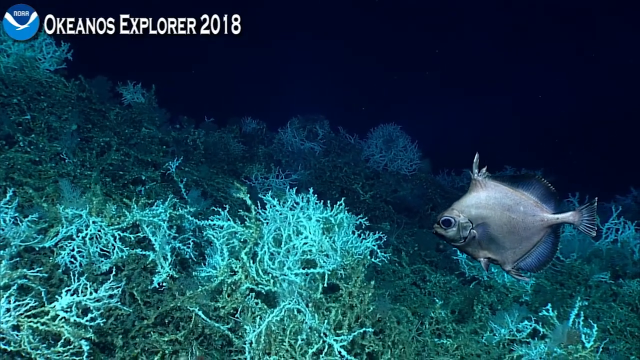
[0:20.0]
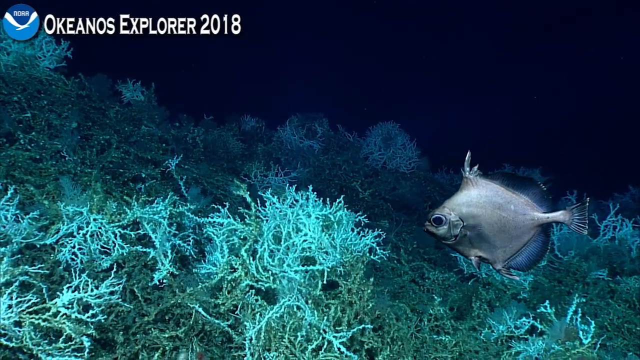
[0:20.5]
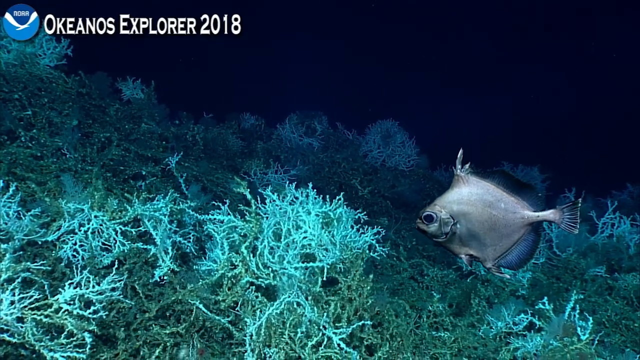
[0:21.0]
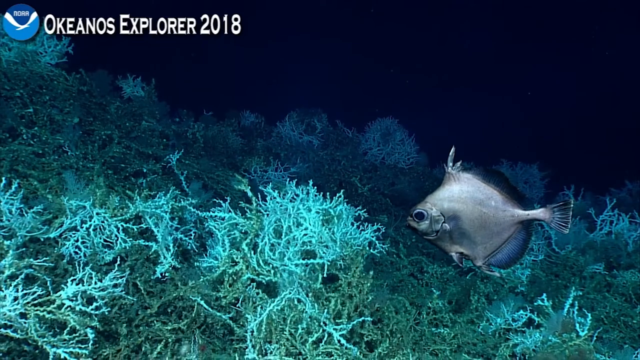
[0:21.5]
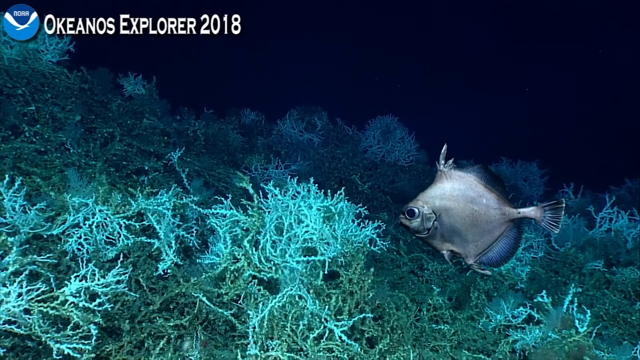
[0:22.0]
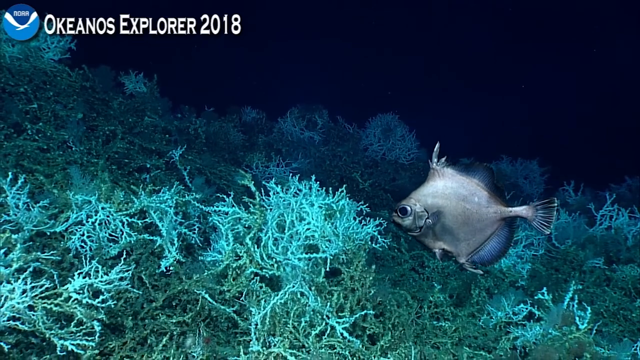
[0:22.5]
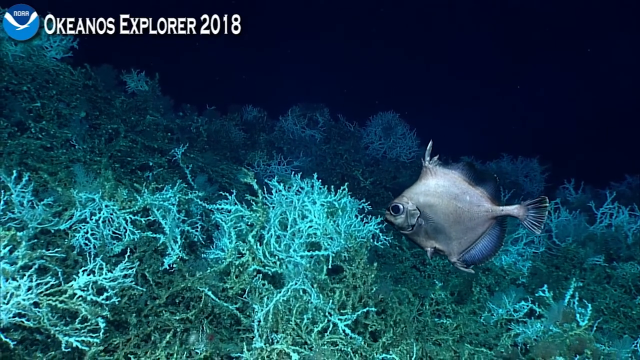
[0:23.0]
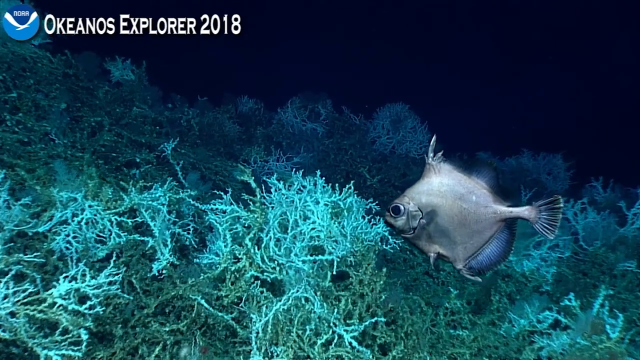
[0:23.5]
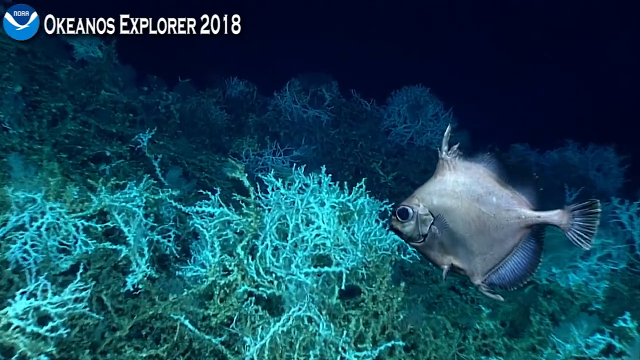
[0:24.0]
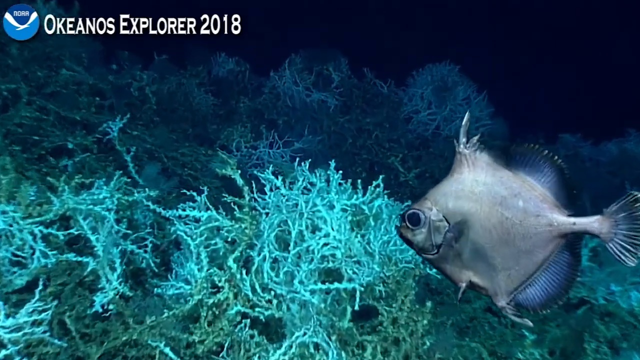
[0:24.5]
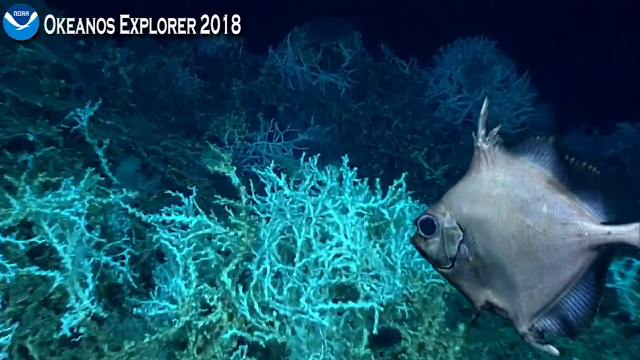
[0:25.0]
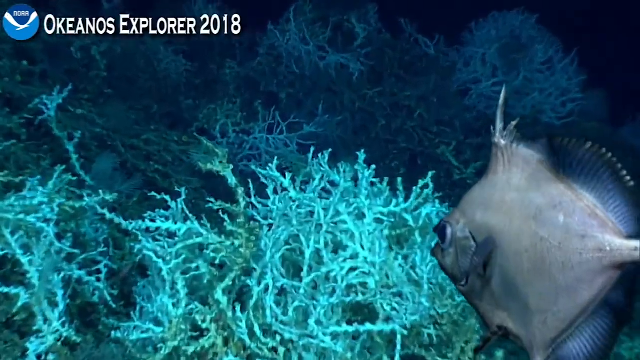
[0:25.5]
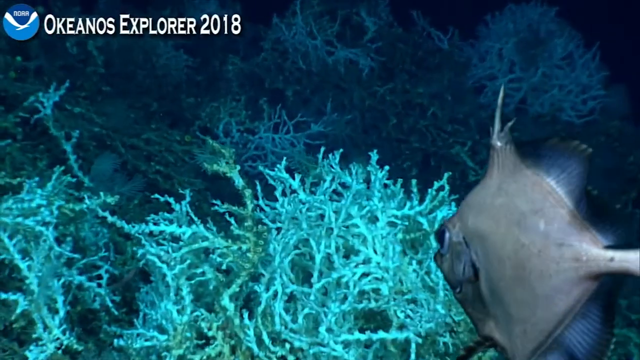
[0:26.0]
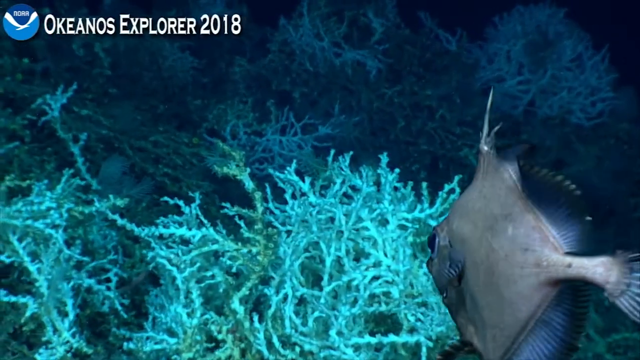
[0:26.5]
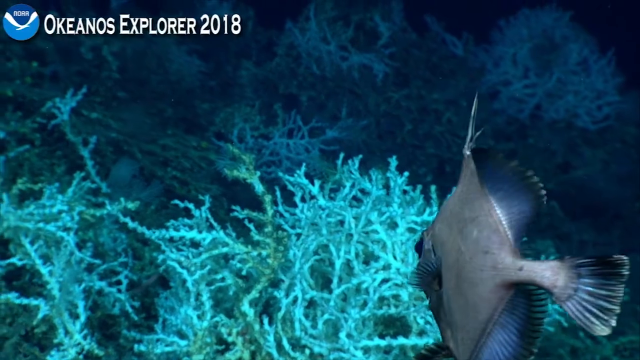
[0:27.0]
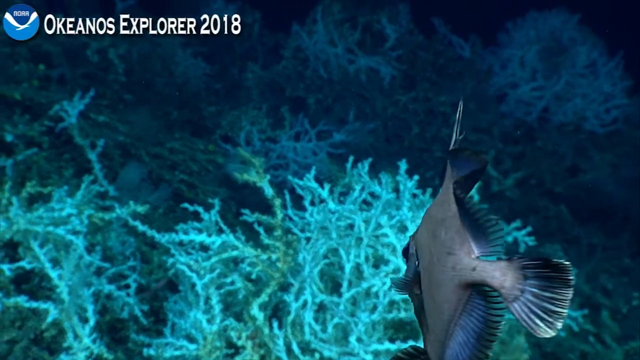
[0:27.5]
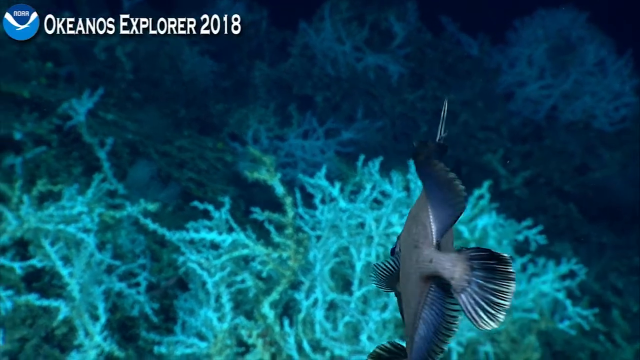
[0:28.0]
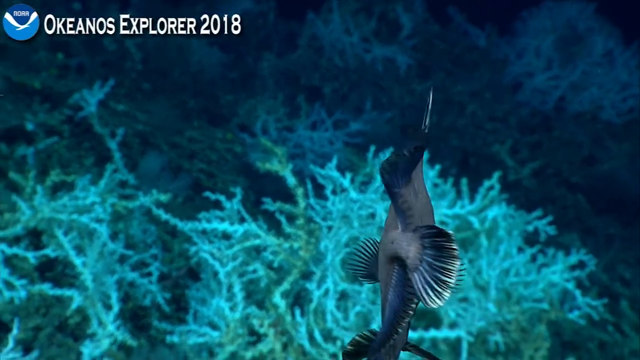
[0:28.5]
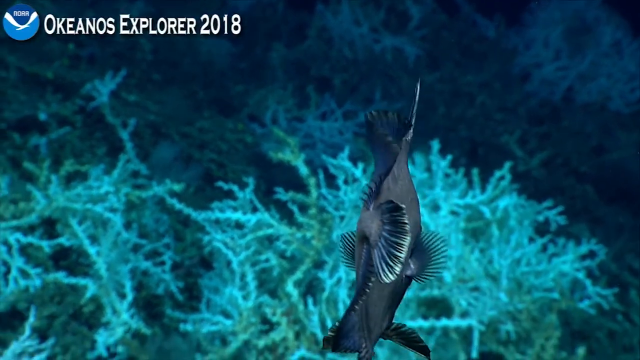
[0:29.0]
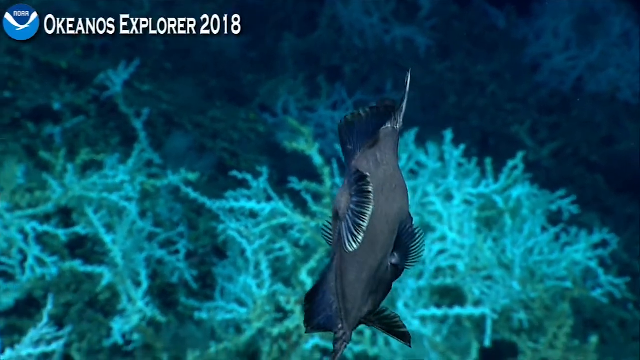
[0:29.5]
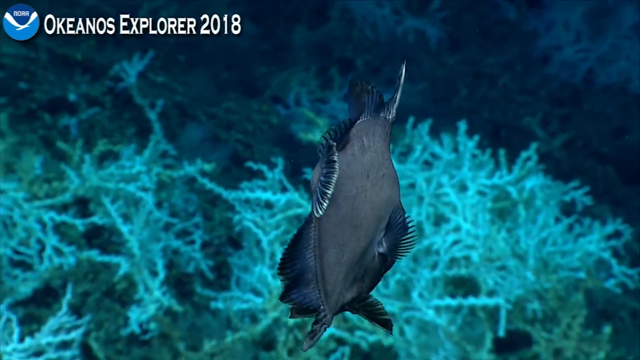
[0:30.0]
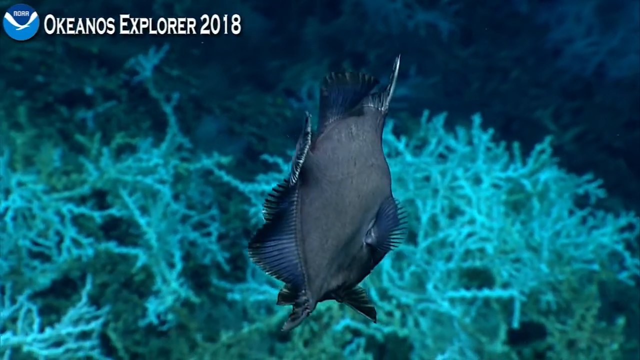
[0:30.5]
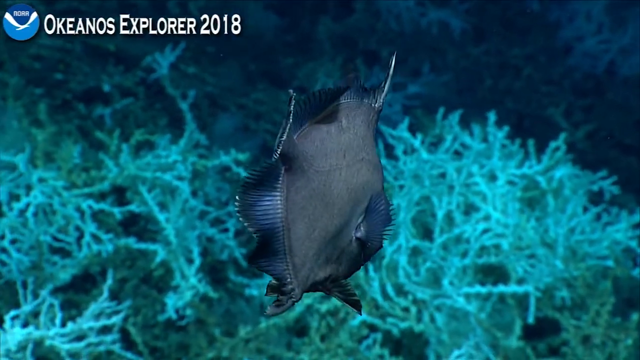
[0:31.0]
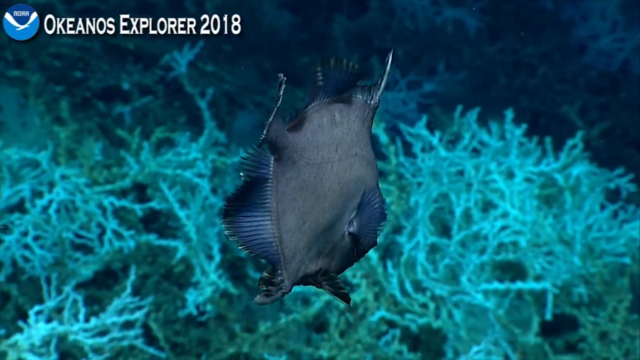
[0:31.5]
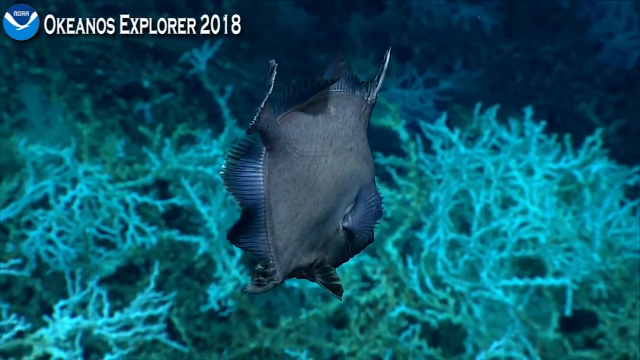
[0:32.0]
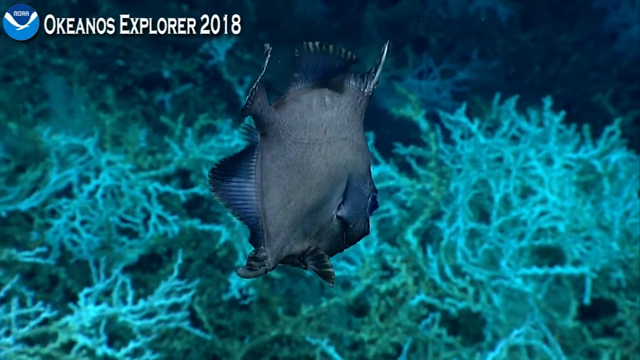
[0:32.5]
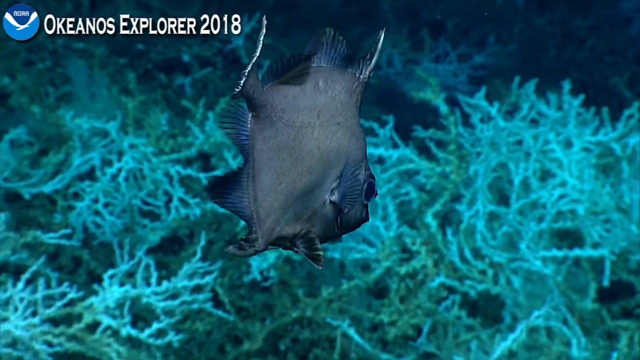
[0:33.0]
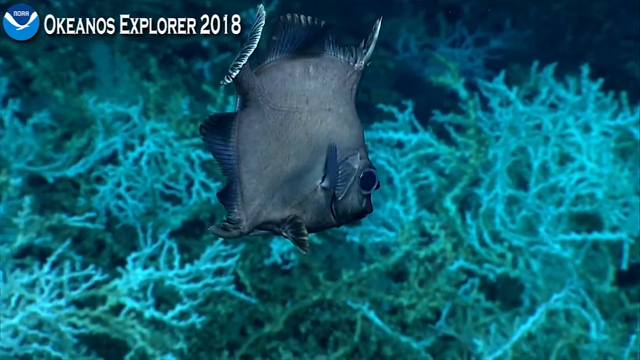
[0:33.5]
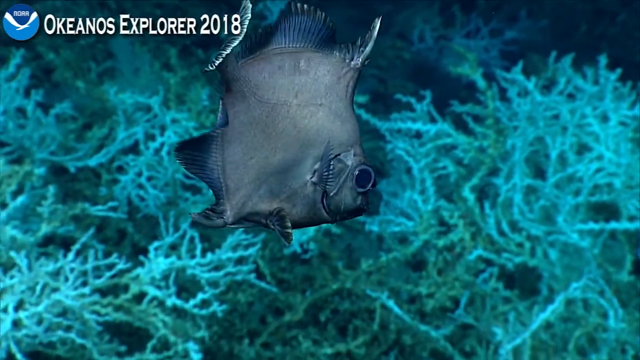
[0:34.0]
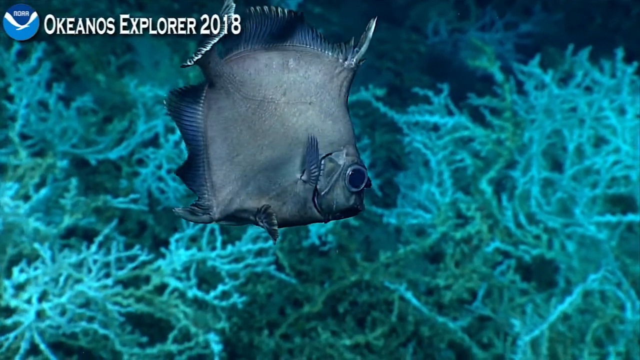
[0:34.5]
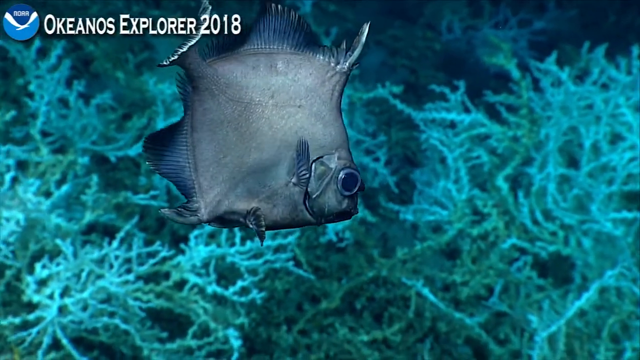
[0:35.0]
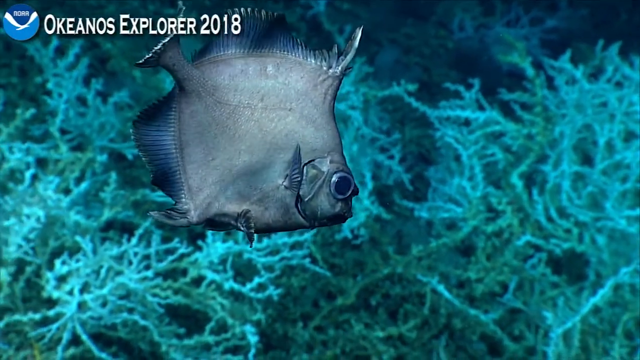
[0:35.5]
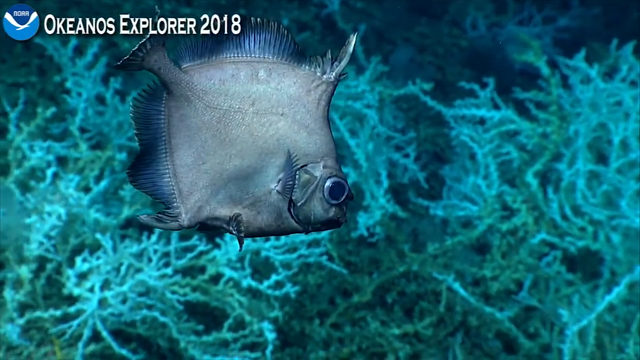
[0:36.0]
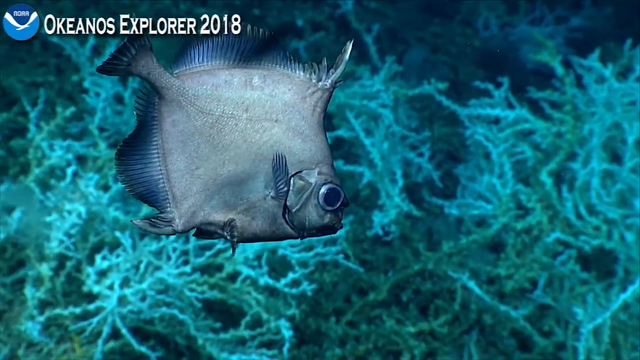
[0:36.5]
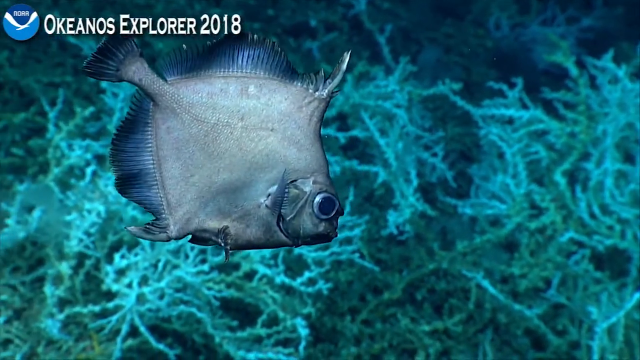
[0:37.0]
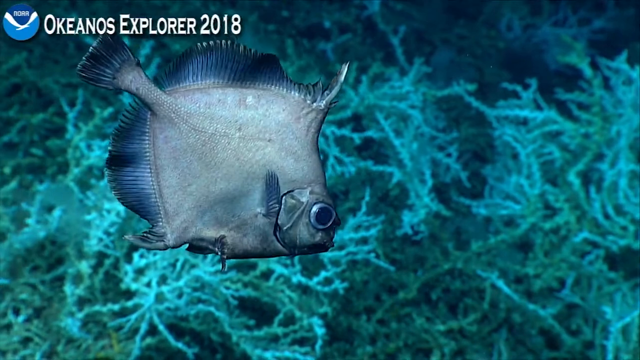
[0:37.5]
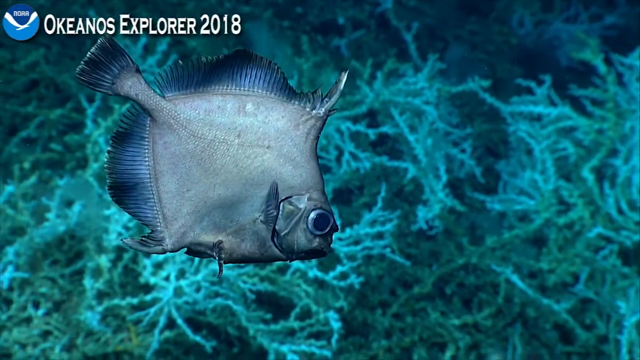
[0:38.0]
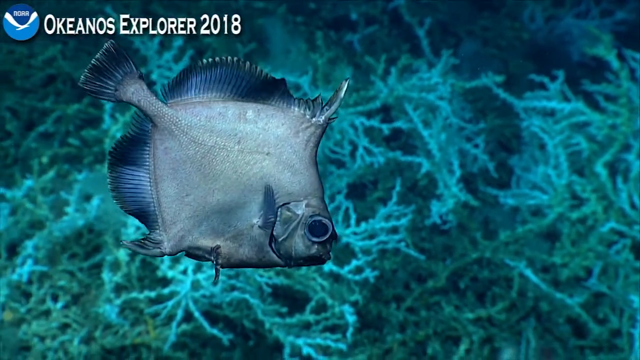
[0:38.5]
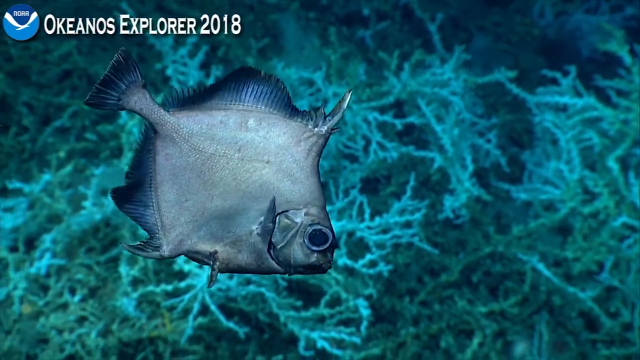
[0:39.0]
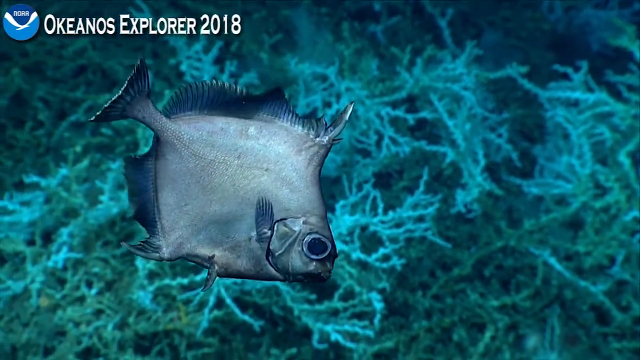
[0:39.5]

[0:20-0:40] An underwater floating shot is next to a gray fish with blue fins, floating on the bottom right side of the screen above a coral reef covered with vegetation. A light shines on the reef and the fish, but farther into the background the water turns a darker blue, obscuring anything beyond a certain distance. In the top left of the screen is a seagull logo, and next to it, in white lettering, "Okeanos Explorer 2018." The fish slowly moves its fins as it moves in toward the center, then turns to its right in line with the camera. The camera zooms in on the fish while it is directly in line with the view, before the fish rotates back onto its right side facing the camera. It has a large bulging eye with a large black pupil and is mostly flat vertically. It rotates around and downward, looking toward the camera, as the scene ends.